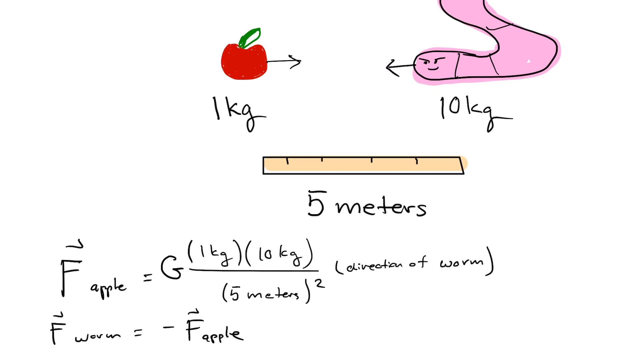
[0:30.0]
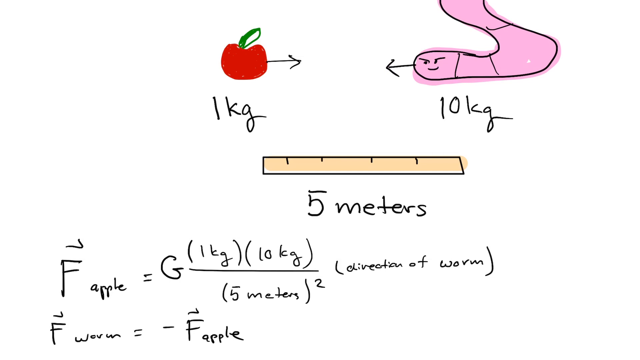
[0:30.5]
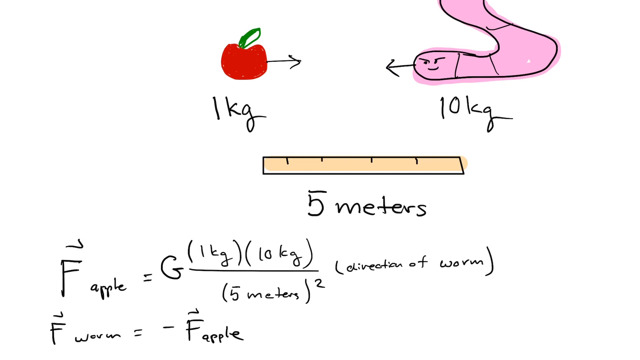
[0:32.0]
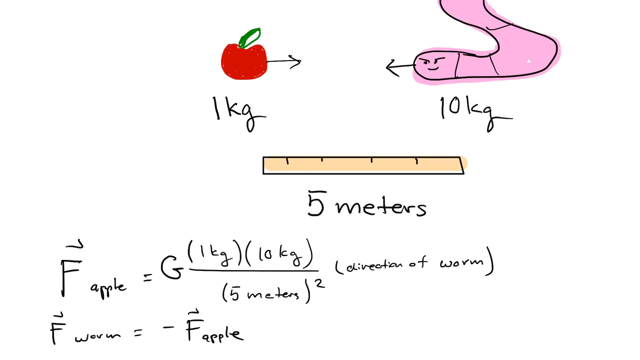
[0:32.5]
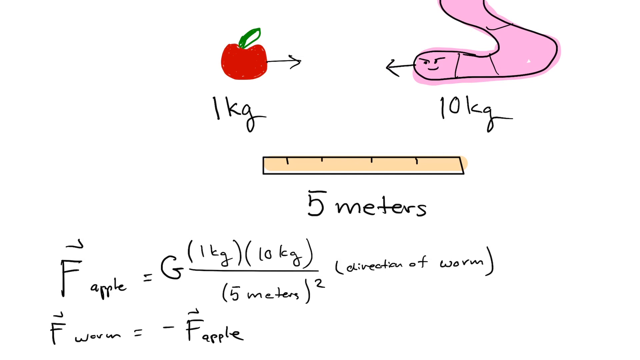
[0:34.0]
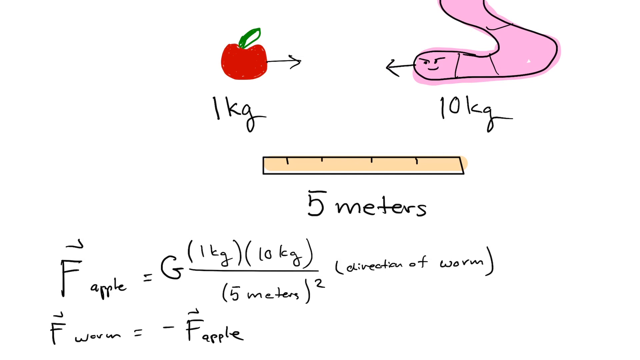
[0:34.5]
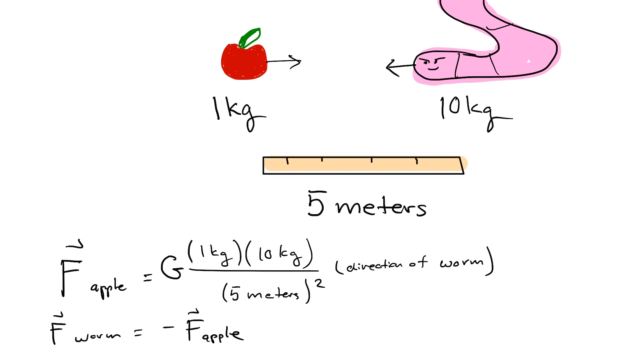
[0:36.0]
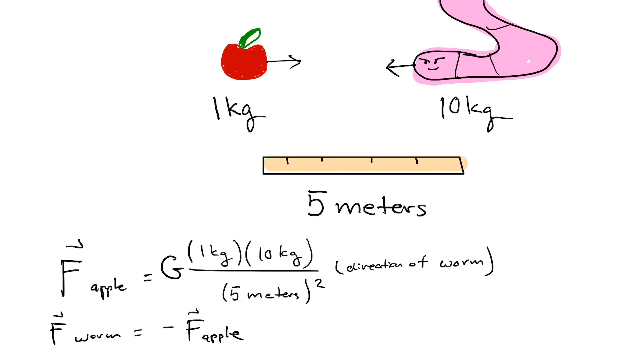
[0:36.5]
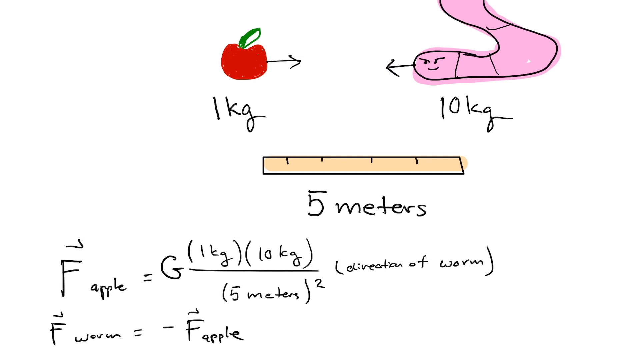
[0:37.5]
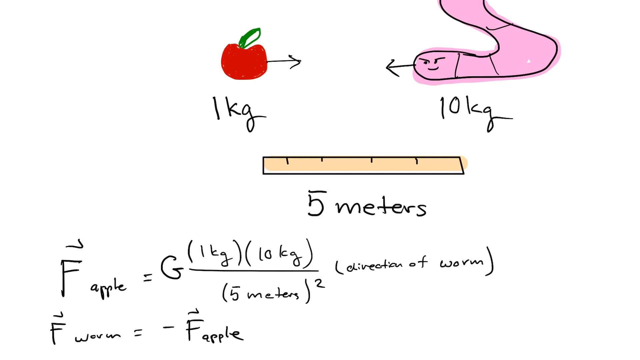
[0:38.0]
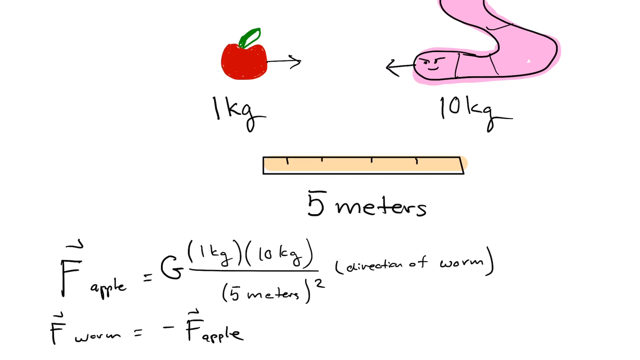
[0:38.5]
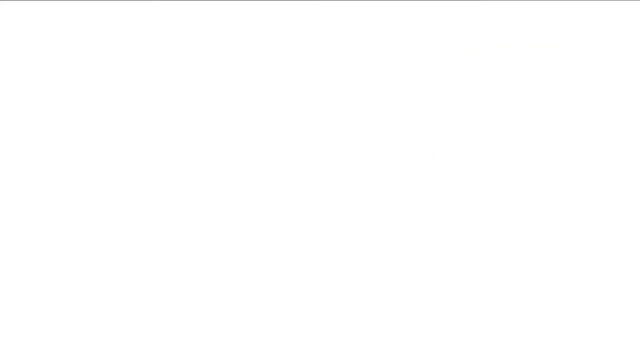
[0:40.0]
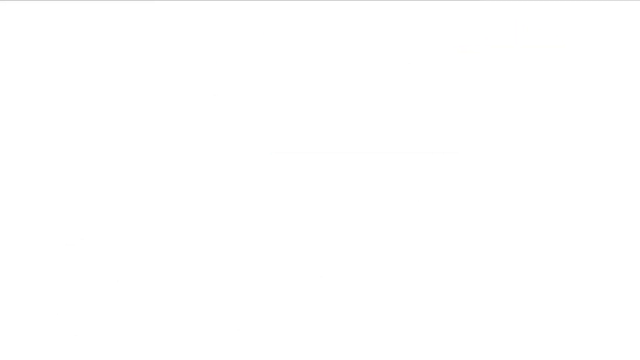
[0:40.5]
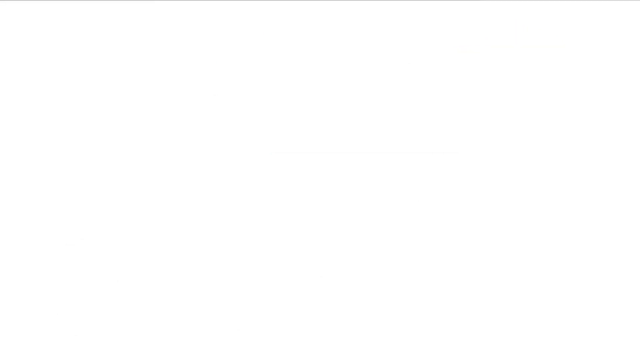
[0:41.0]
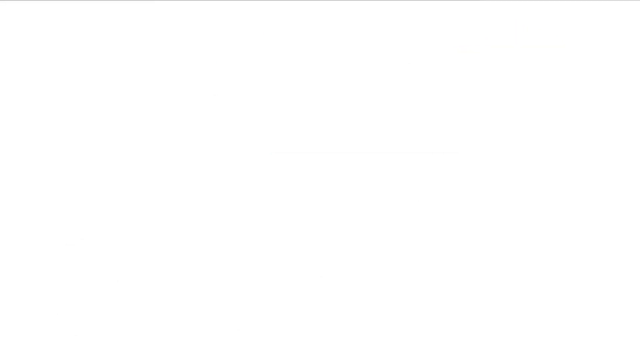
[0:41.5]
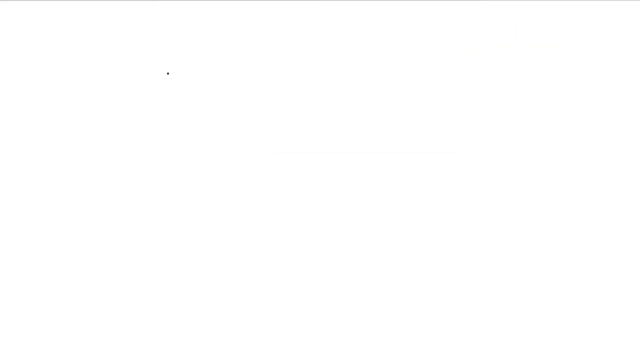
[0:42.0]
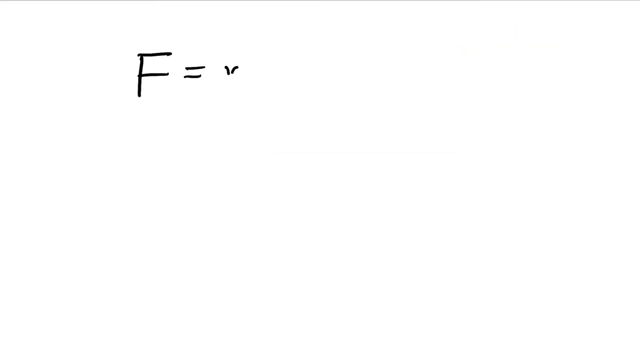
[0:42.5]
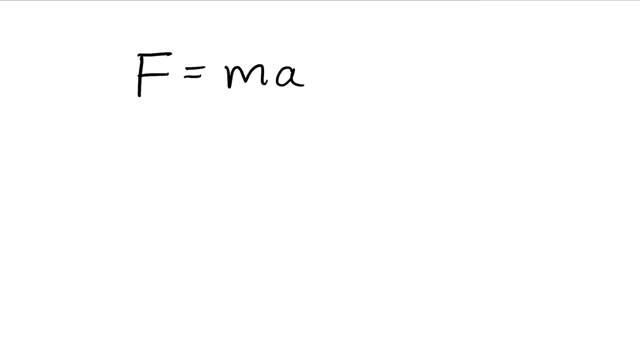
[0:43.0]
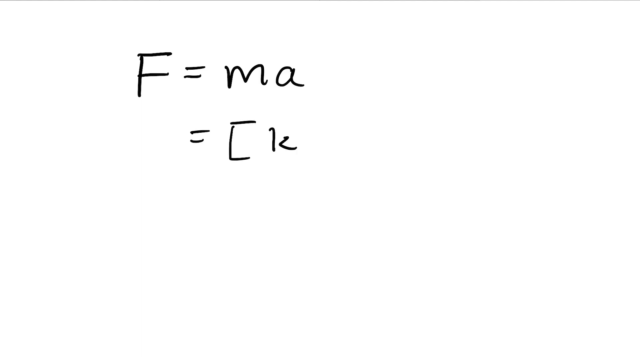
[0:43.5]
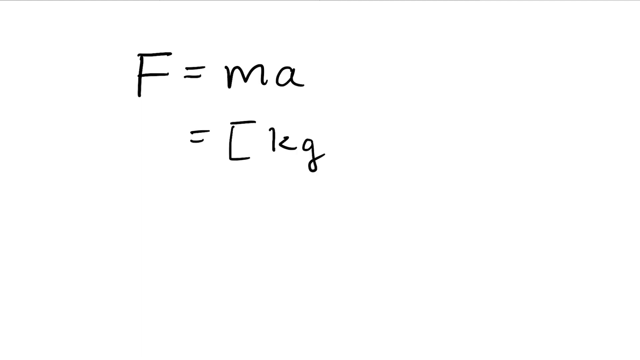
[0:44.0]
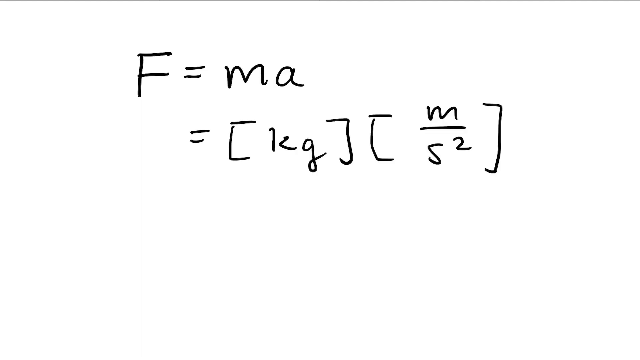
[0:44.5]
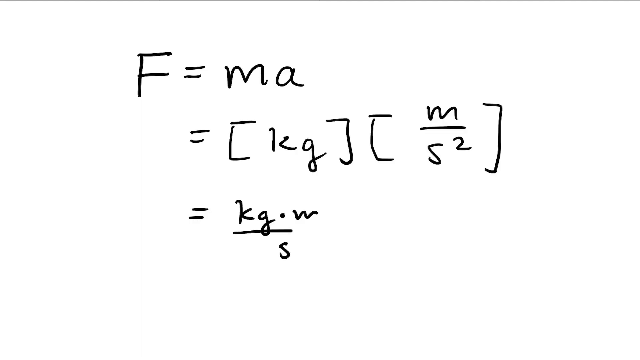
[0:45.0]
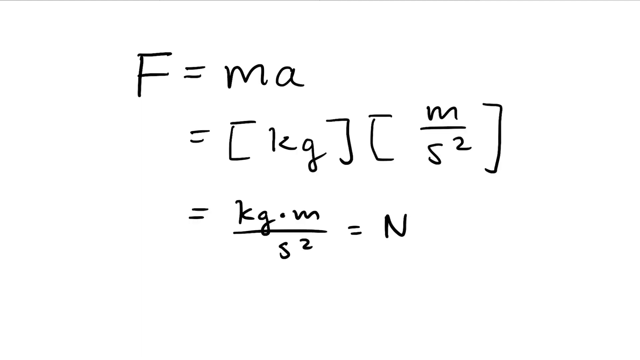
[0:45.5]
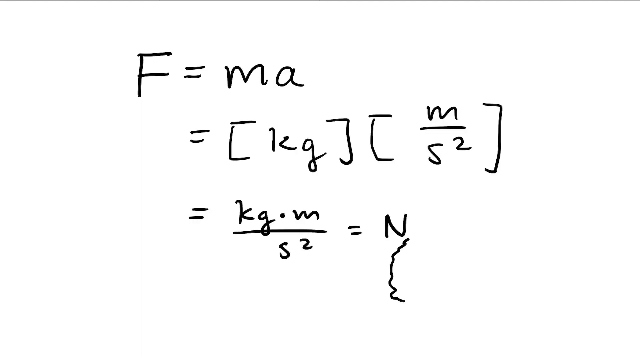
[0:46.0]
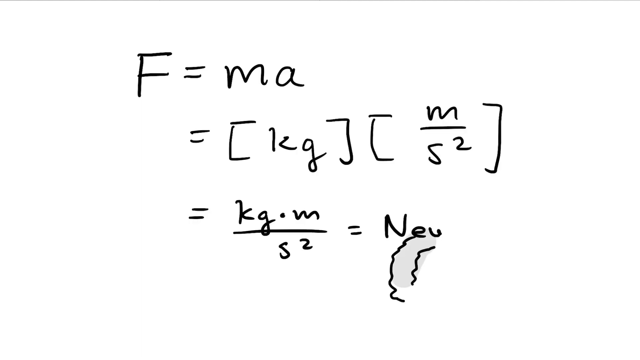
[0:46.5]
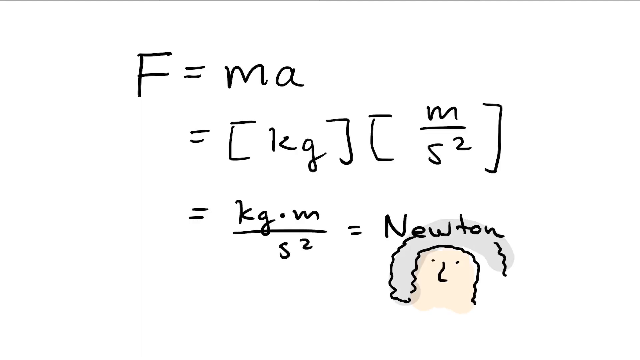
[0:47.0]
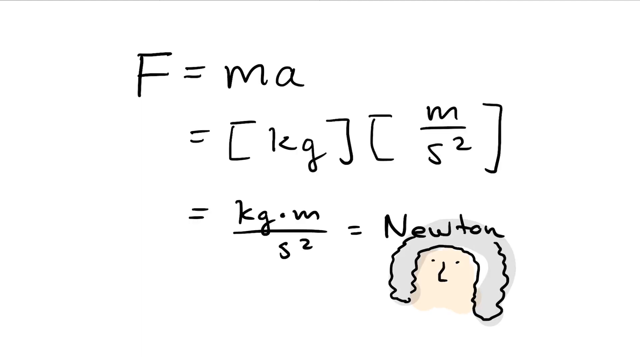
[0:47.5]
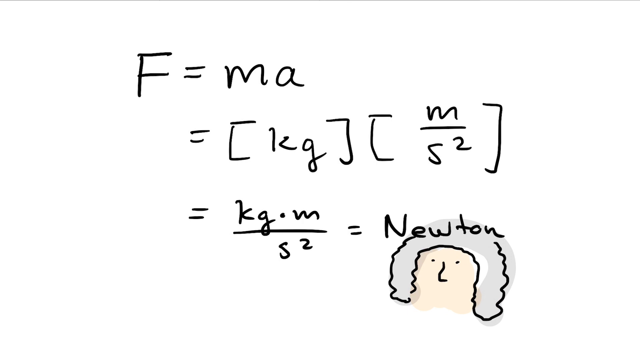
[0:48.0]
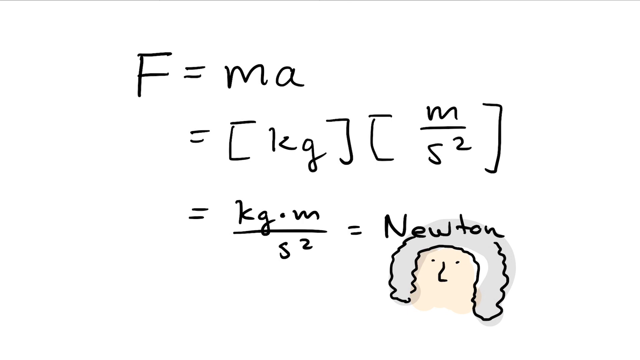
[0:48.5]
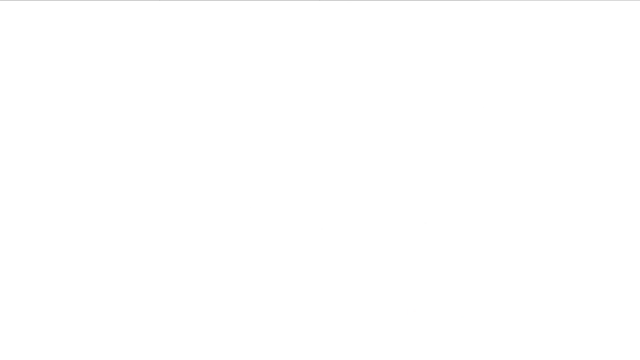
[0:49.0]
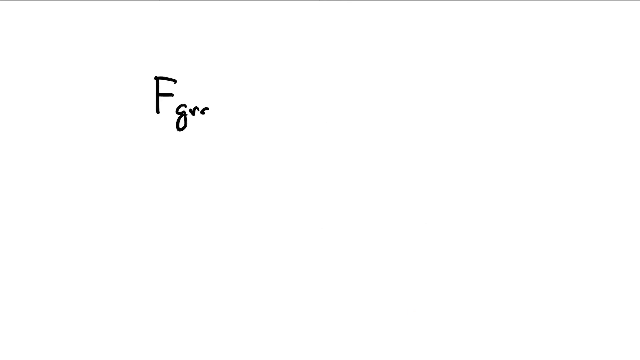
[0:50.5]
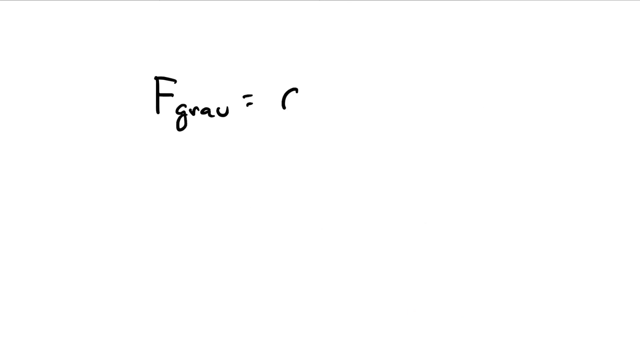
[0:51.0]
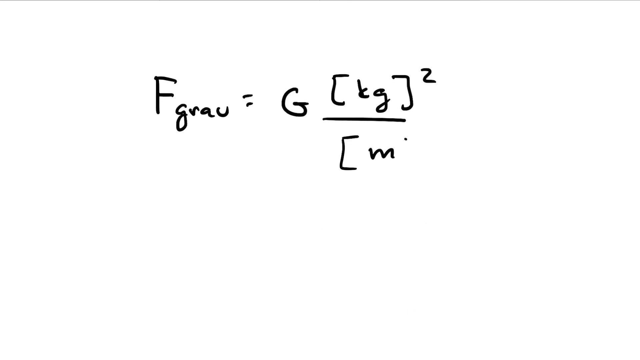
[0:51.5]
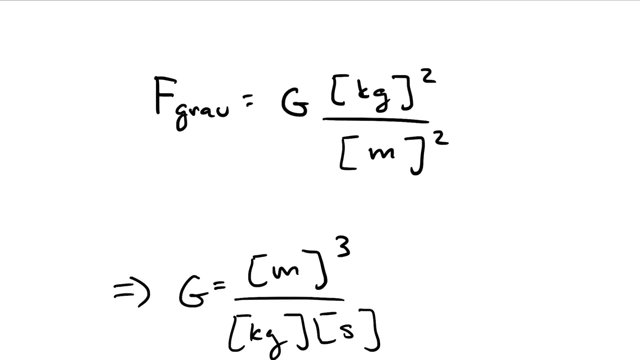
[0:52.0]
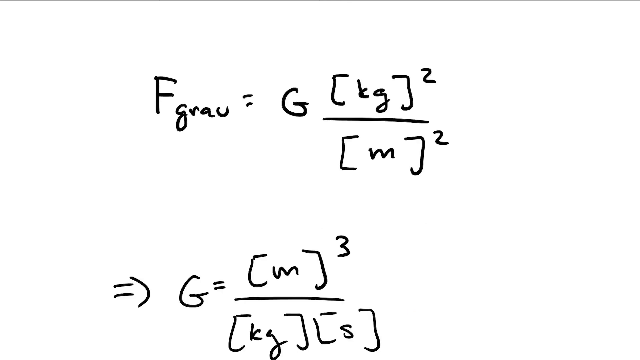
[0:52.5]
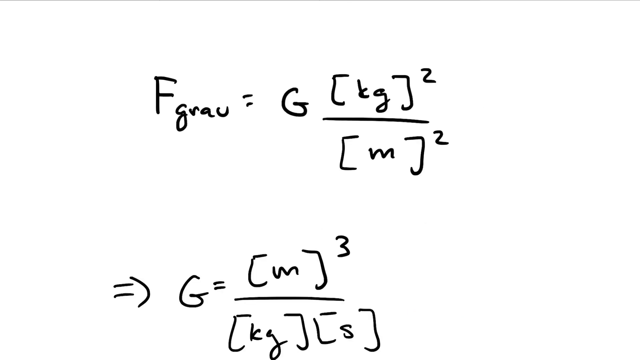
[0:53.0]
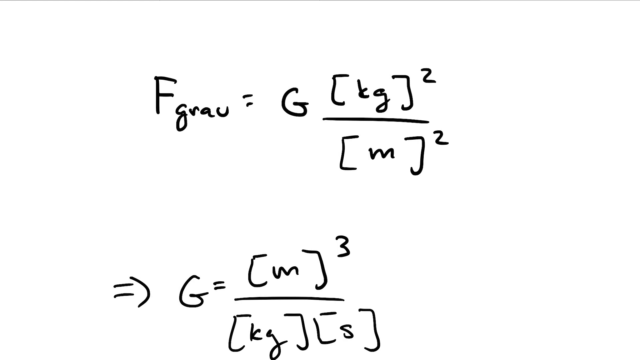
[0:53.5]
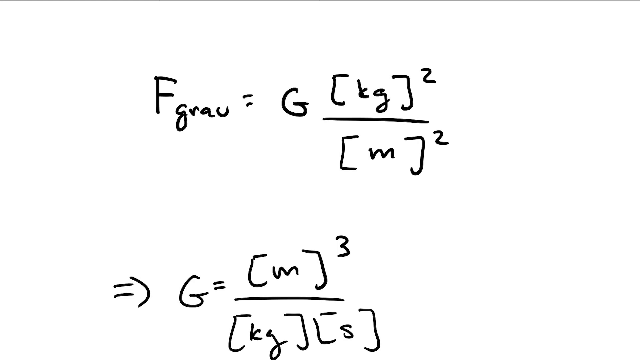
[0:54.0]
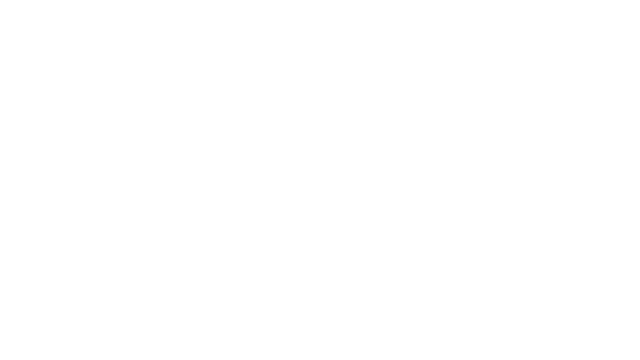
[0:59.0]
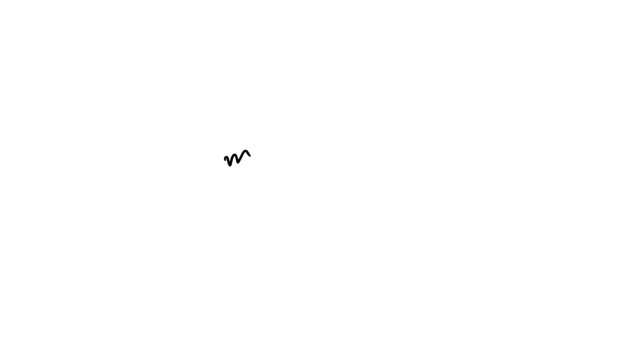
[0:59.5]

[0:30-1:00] The hand-drawn animation continues on what looks like a whiteboard with a plain white background. At the upper top center is a very poorly drawn red apple with a green leaf, with "1 kg" written underneath. An arrow points from the apple toward a pink worm, which looks very mysterious, and another arrow points from the worm back toward the apple. Everything is hand drawn with black outlines. Under the worm is "10 kg," and under that is a ruler with a black outline, colored in yellow, with "5 meters" written beneath it. Below that is a mathematical equation: s apple equals g times (1 kg)(10 kg) over 5 meters squared, followed by "(direction of worm)", and underneath that, s worm equals minus s apple.